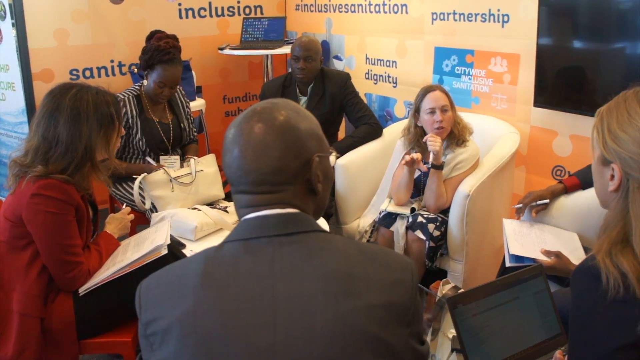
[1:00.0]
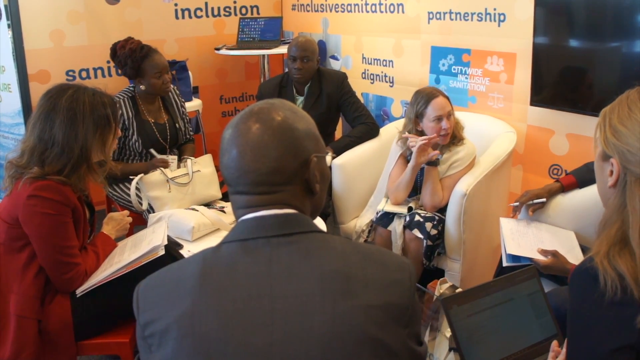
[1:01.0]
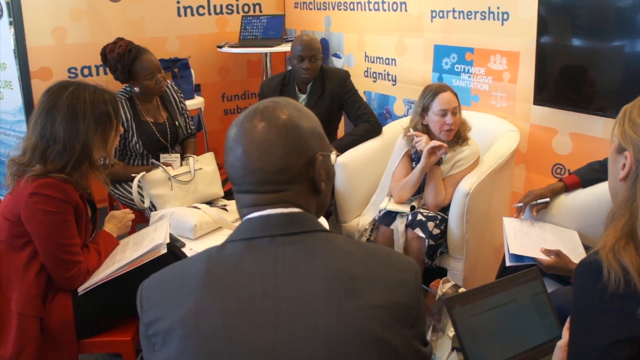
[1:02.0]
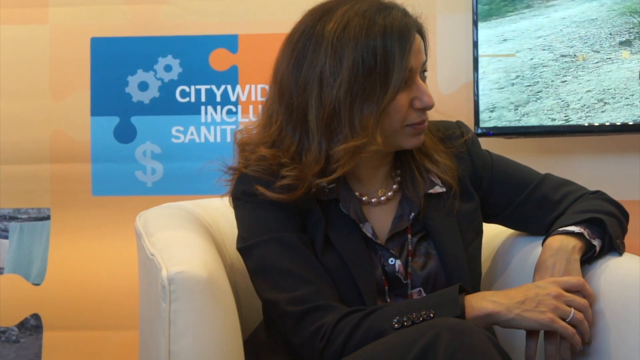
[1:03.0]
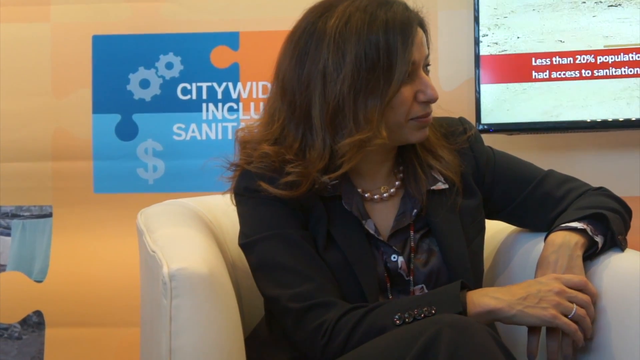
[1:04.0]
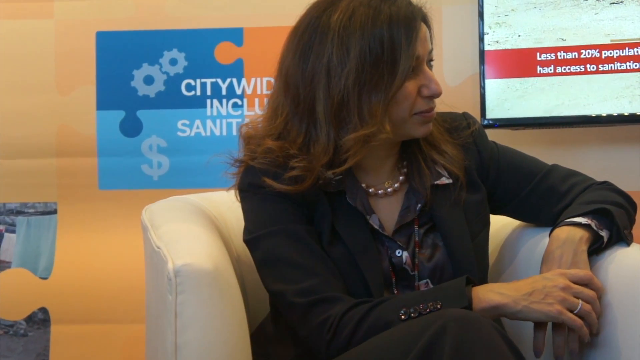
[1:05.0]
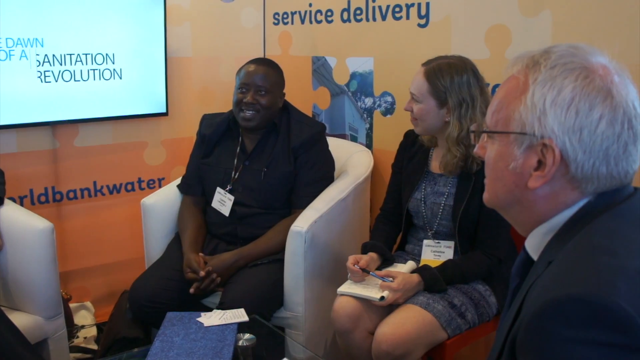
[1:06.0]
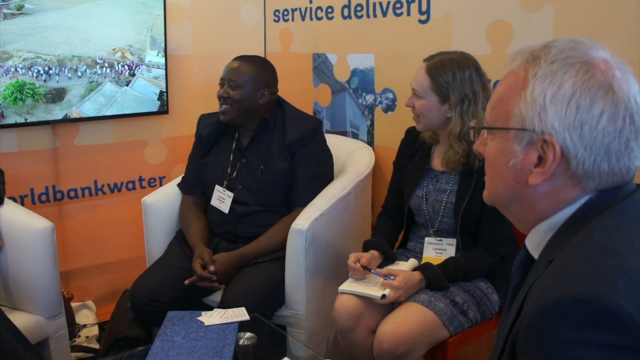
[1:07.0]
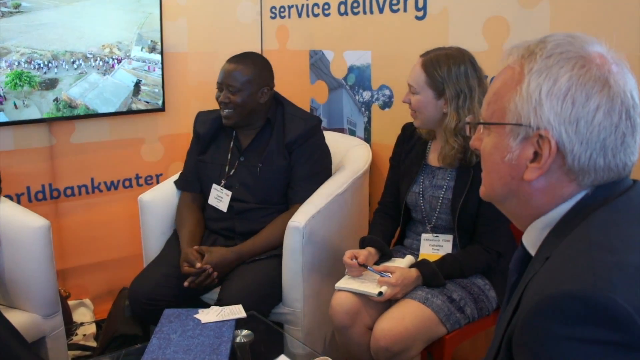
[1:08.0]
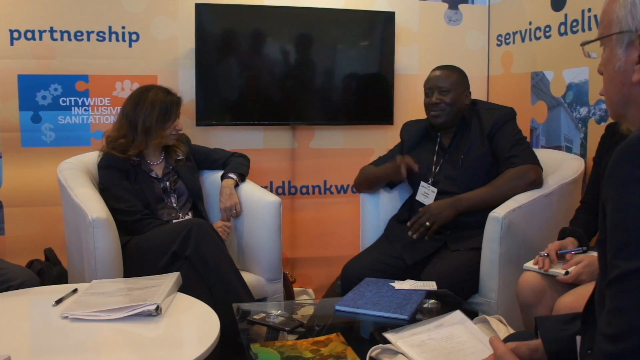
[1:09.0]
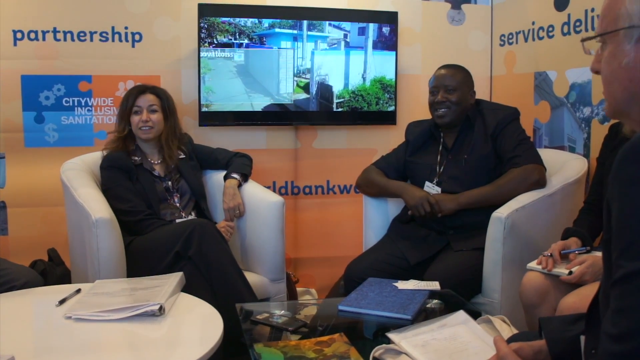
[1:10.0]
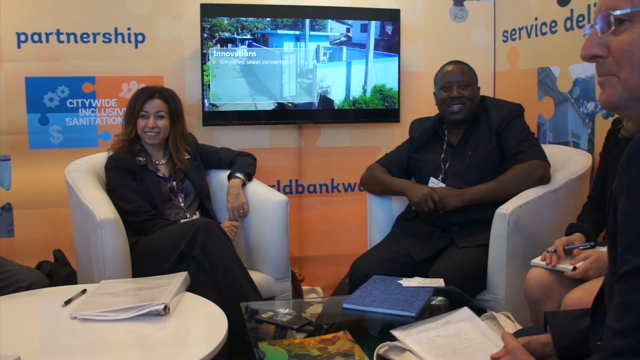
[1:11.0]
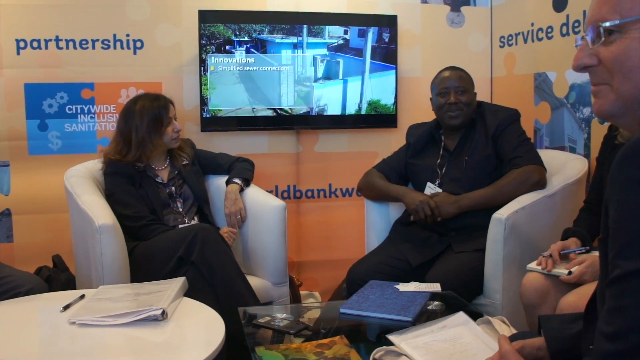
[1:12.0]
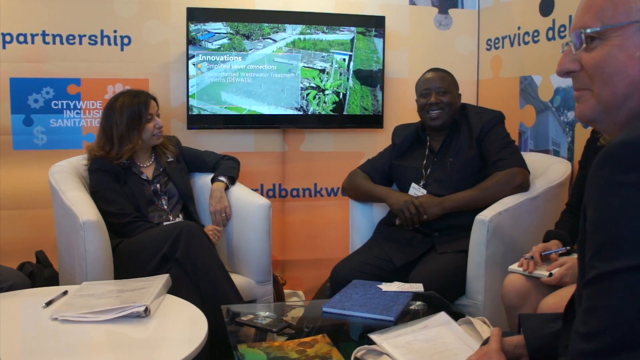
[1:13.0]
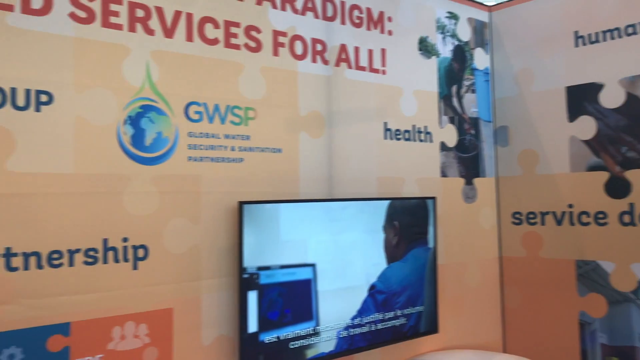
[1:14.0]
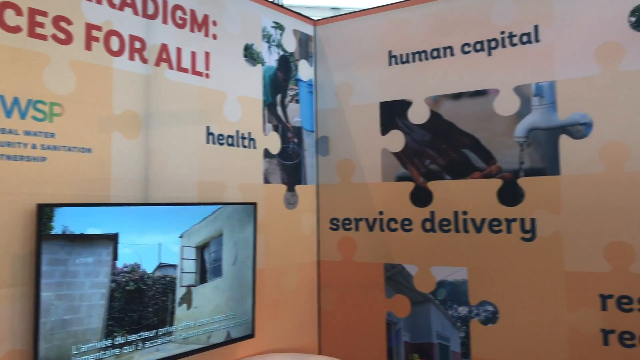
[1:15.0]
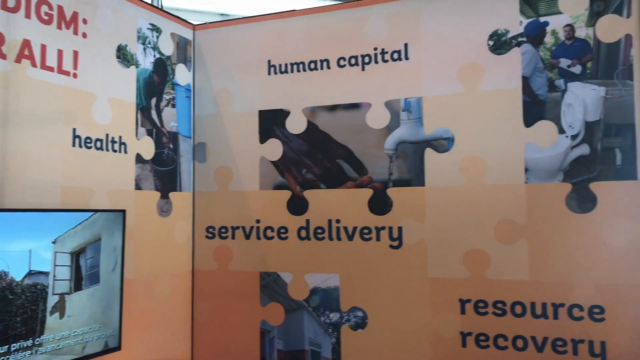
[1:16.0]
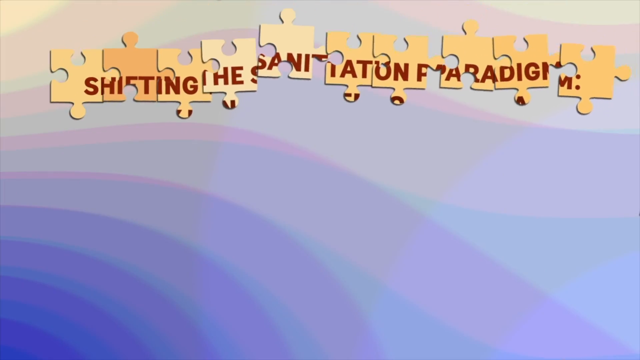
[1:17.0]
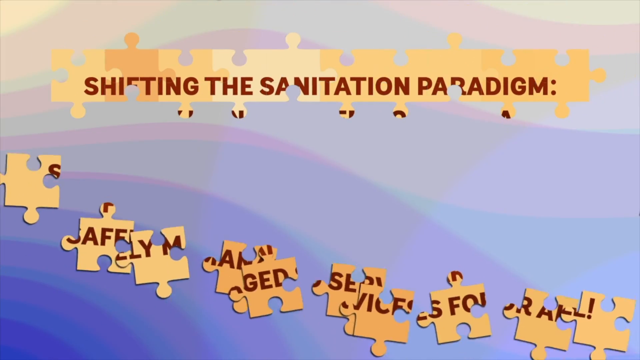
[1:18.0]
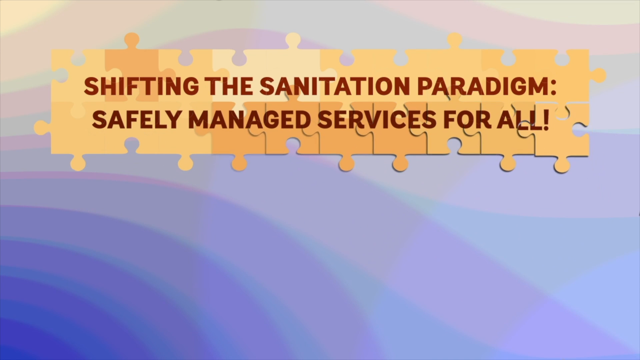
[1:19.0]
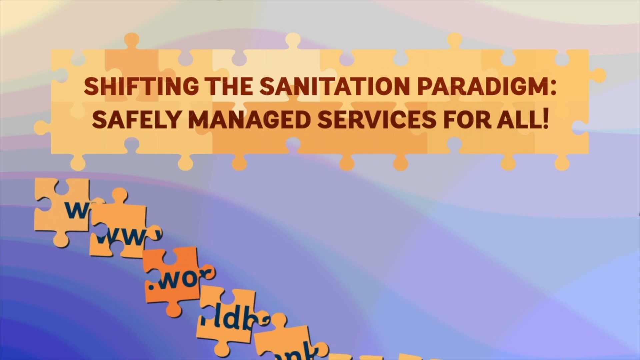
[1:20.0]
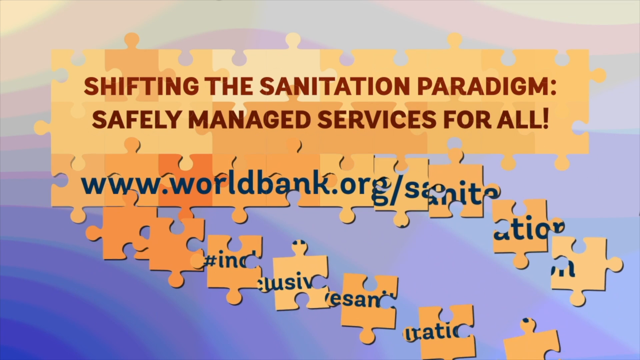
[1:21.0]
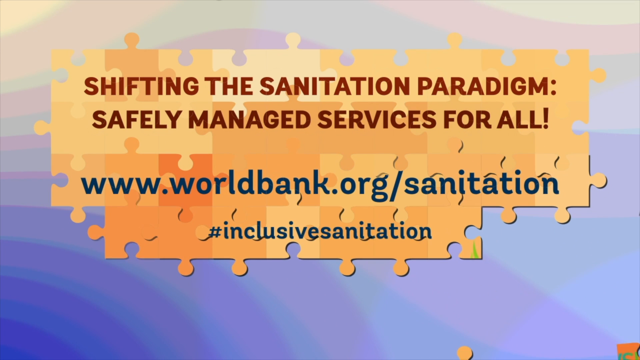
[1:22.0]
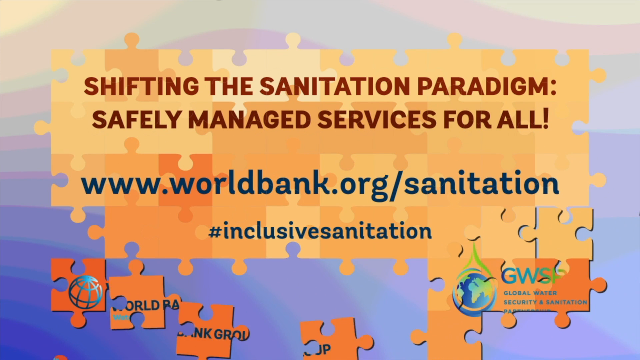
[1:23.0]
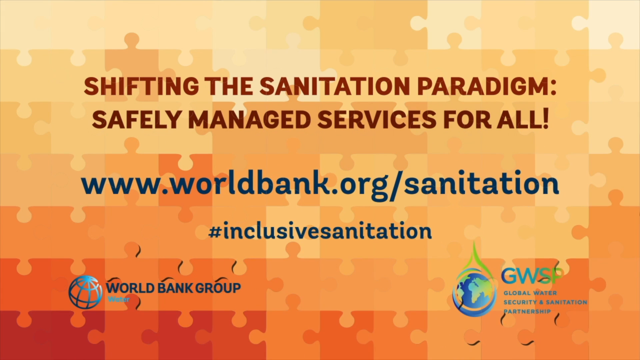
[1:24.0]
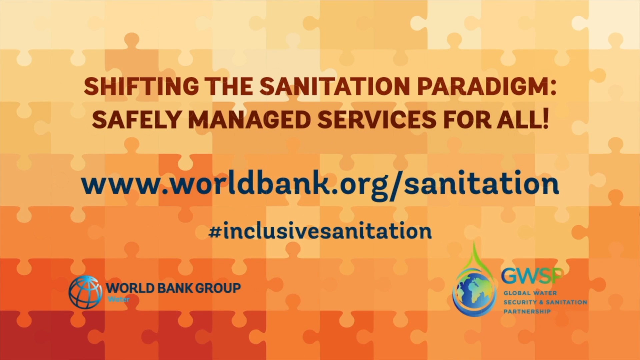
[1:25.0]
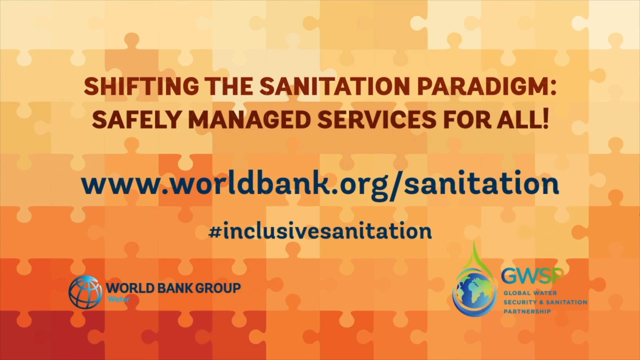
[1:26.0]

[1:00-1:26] The discussion continues among those sitting in the room, and there appears to be a change of participants, with new faces now present in the group; it could be a different day and a different meeting. A close-up shot shows a man wearing a black shirt and black trousers who sits in a relaxed stance with his fingers interlaced, smiling and laughing at other members of the group, who reciprocate. The atmosphere appears relaxed, dignified and amicable, though there seems to be a little tension and nervousness, as the subject of discussion is presumably serious and important. The next screen shows an animation that looks like a jigsaw puzzle, with red bold capital lettering reading "Shifting the sanitation paradigm: safely managed services for all".